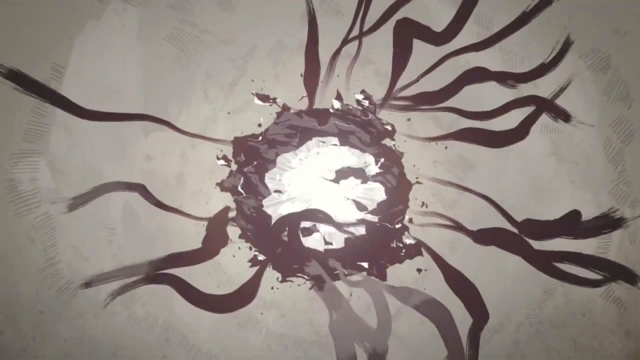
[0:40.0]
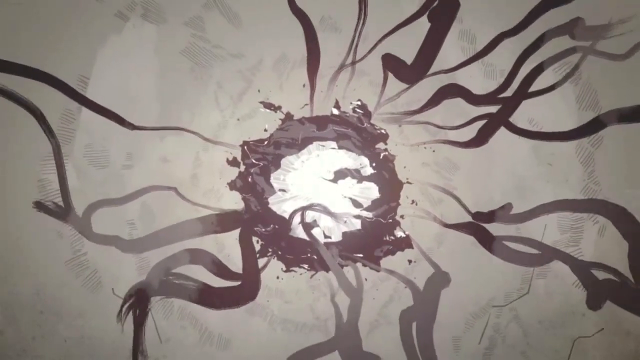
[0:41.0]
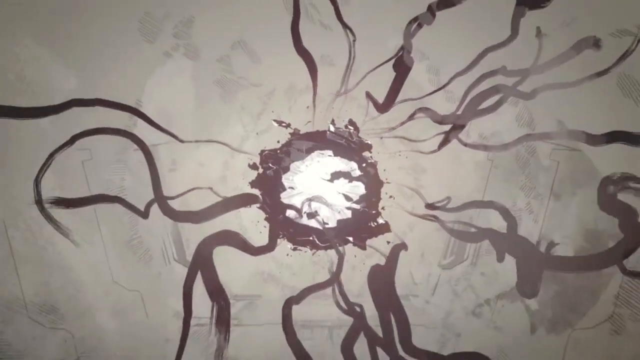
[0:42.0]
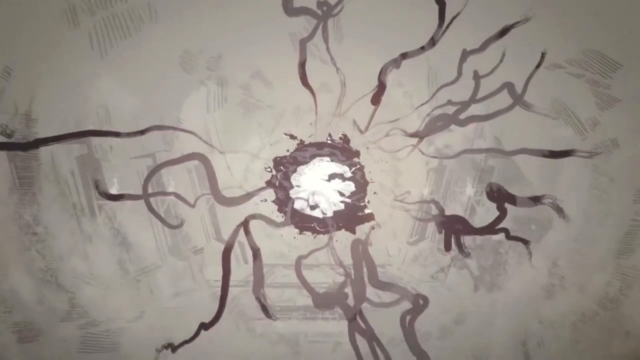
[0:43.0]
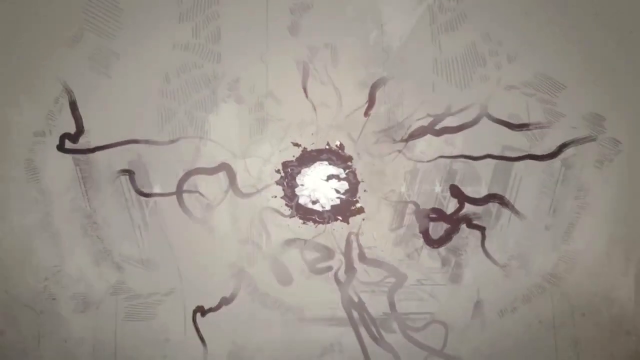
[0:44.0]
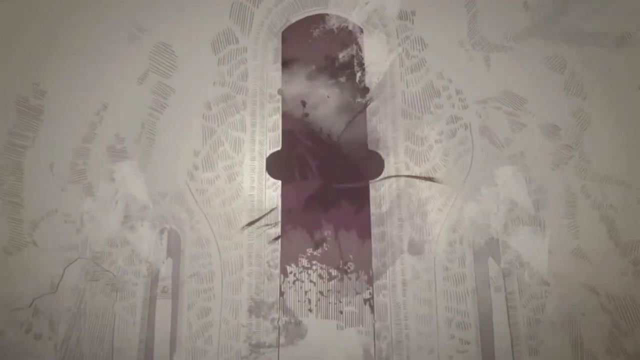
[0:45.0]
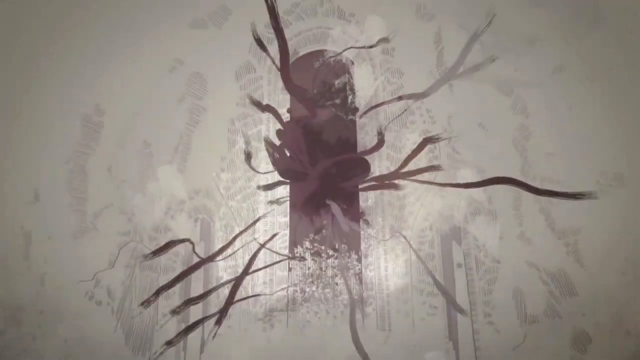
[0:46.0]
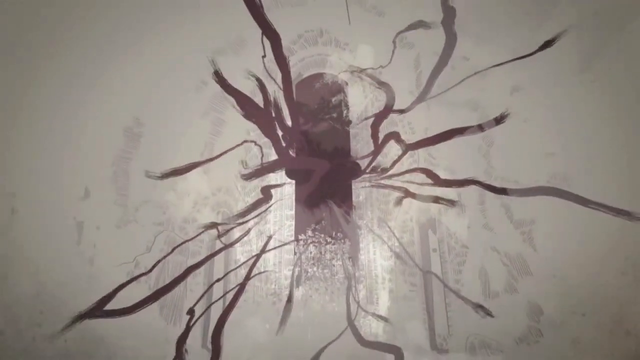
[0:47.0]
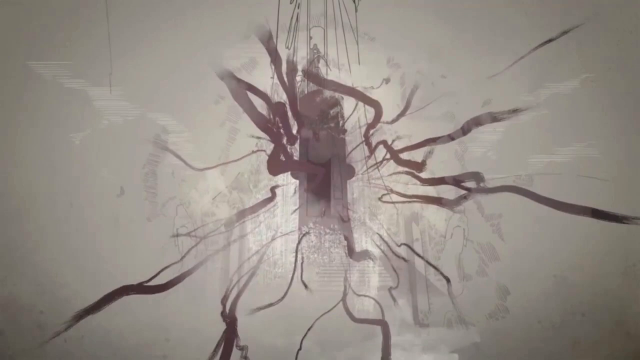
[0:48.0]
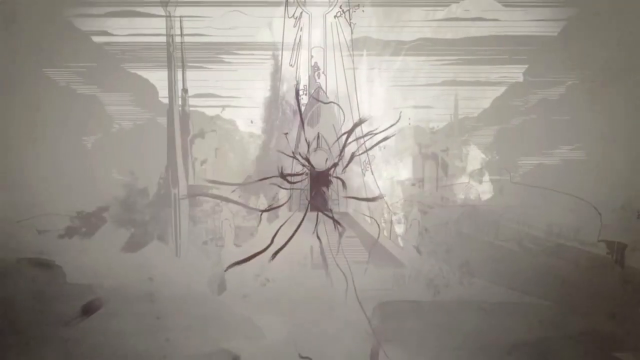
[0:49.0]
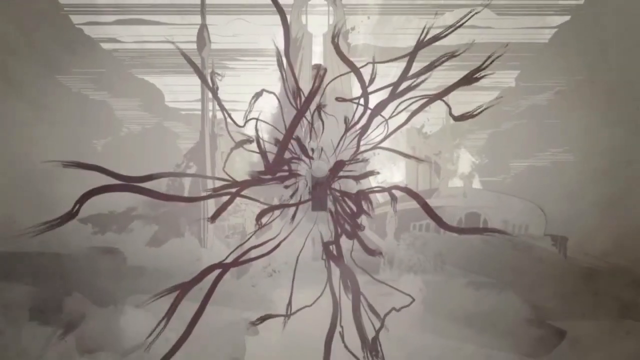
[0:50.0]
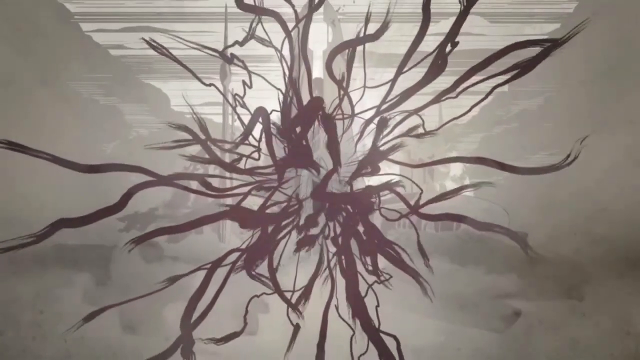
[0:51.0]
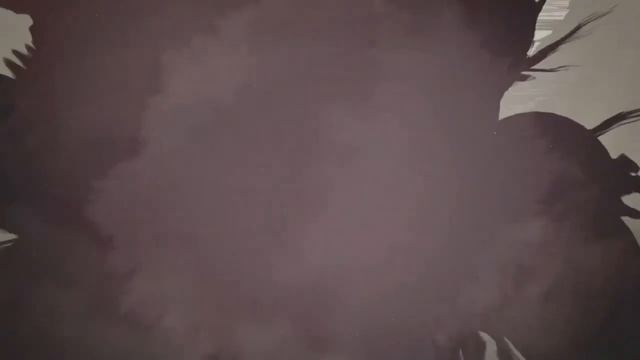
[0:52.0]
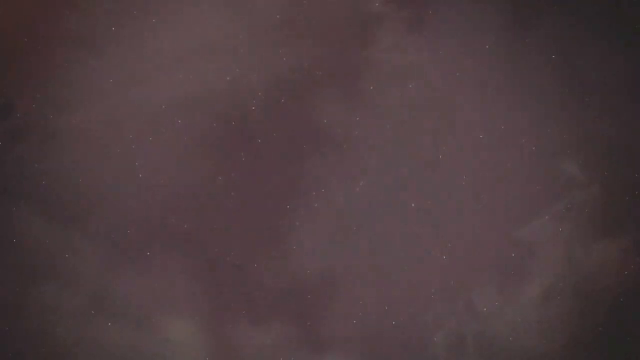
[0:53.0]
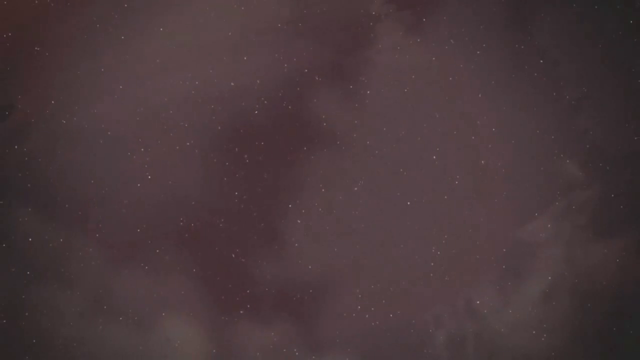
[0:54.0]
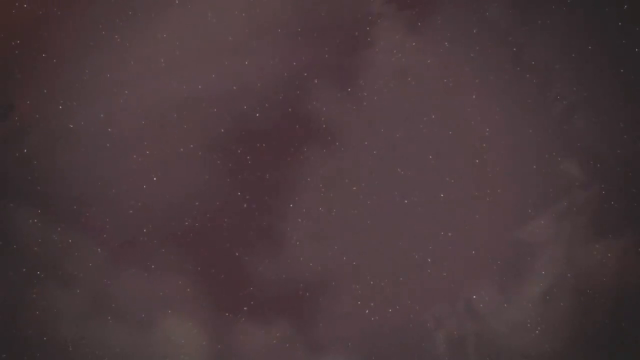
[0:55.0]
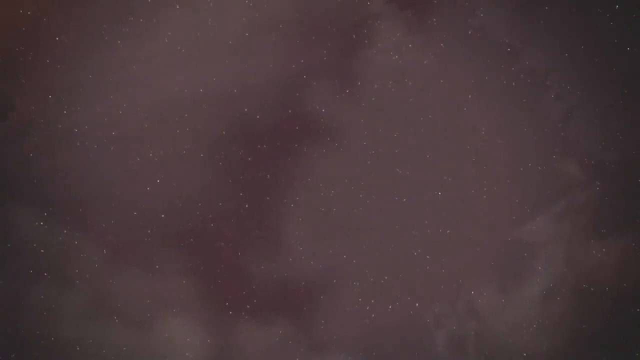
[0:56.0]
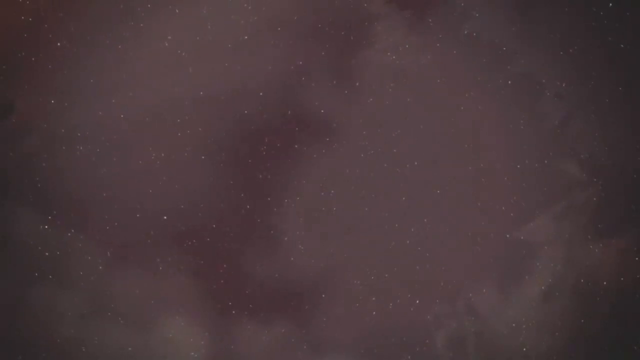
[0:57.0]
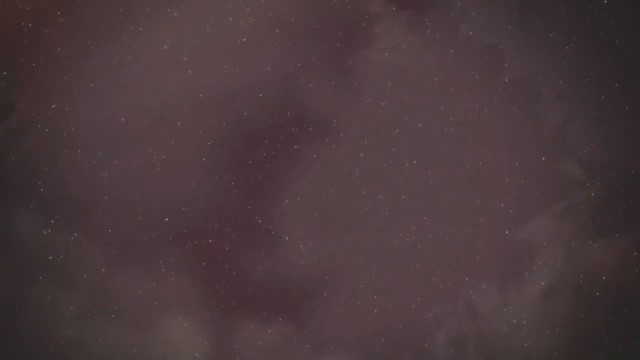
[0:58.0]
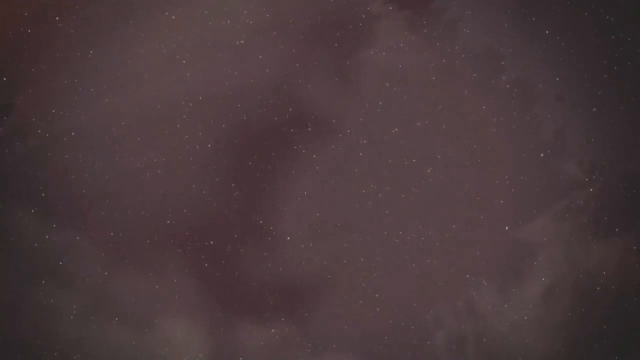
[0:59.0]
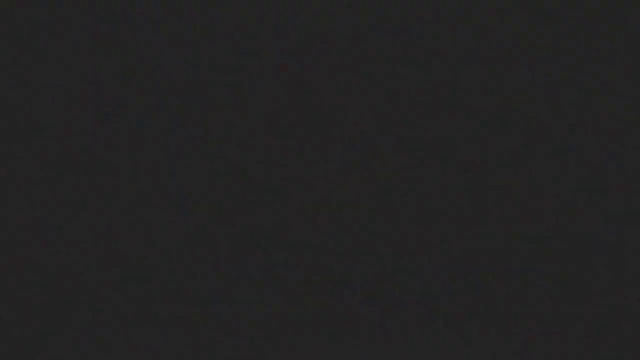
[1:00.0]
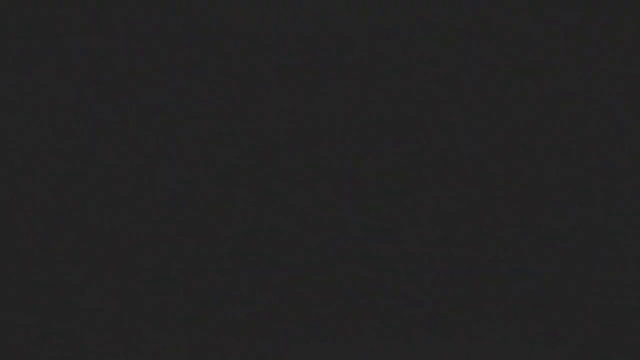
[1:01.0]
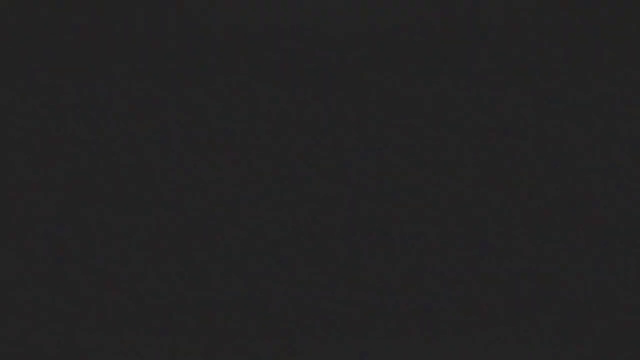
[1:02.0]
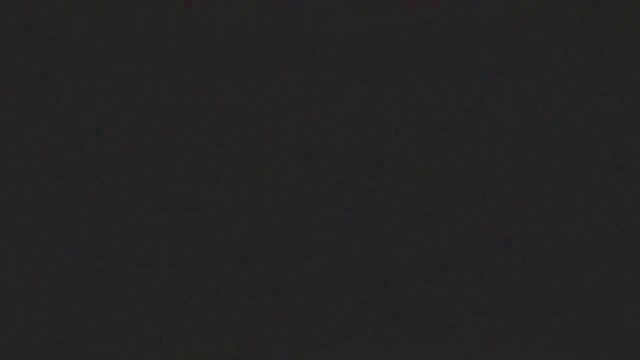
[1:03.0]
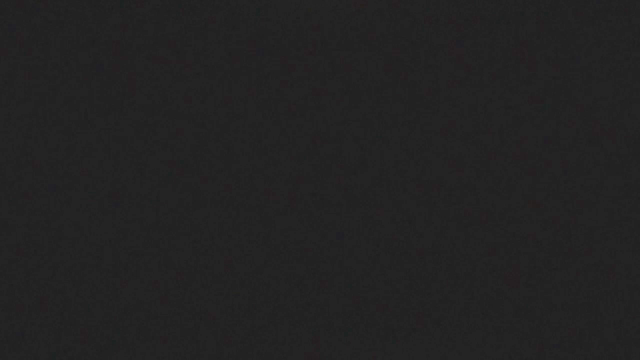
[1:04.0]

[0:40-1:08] A bright light flashes and dust flies everywhere. The round, brownish-maroon organism opens up in the middle, and vine-like ropes escape from it, weaving themselves out of it. The view expands as the vines scatter out of the circle, with dust everywhere. A tall maroon-brown tower appears around the dust. The brownish-maroon vines escape from the tall tower and move throughout the civilization. A tall building is shown with a tower beside it, and the sky and mountains are on the left and right. The veins flow throughout and cover the screen, turning the whole screen a brownish colour with stars, and then the video goes black. The vines apparently represent demons or spirits escaping from the monster's body and spreading out through the civilization. The scene is coloured in brownish maroon. At the end, the buildings are sketched but not coloured in. The colours are muted throughout.